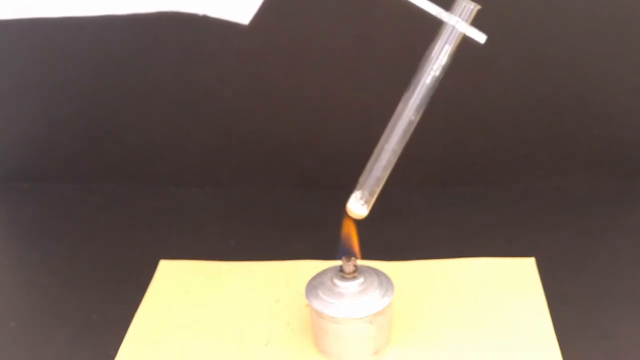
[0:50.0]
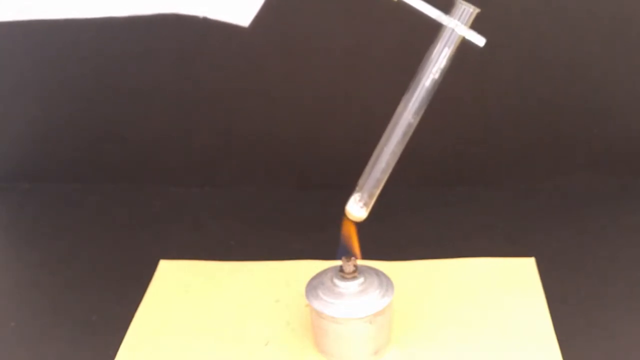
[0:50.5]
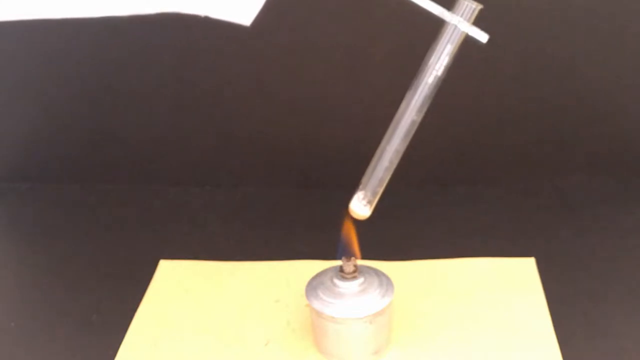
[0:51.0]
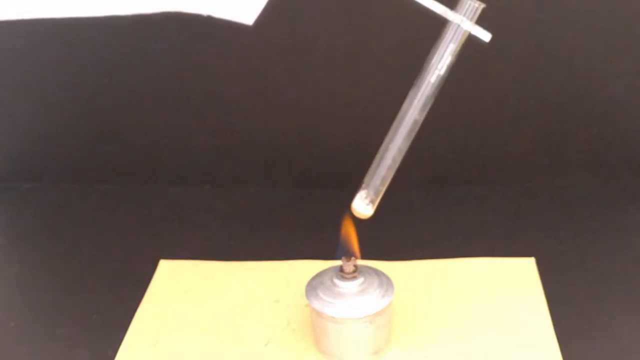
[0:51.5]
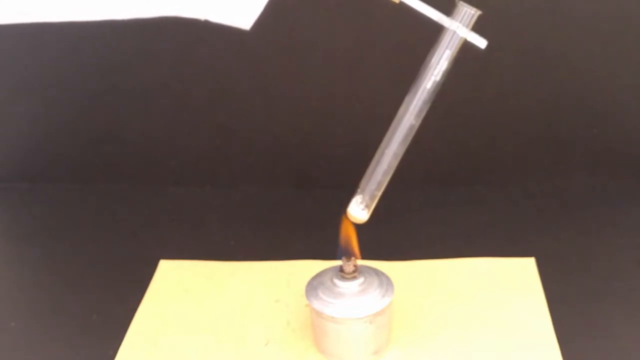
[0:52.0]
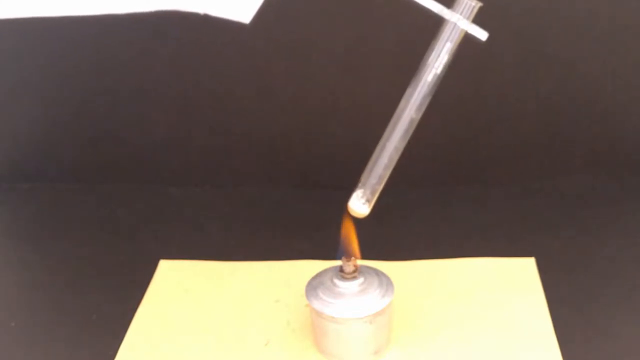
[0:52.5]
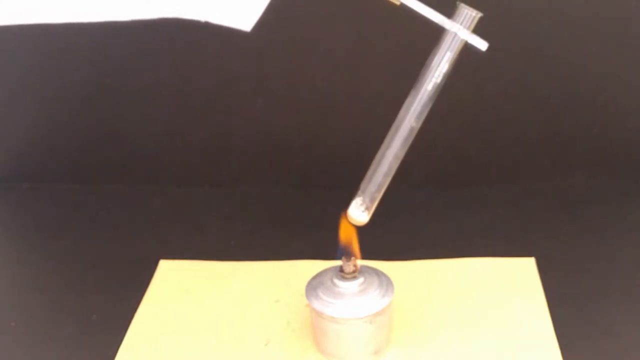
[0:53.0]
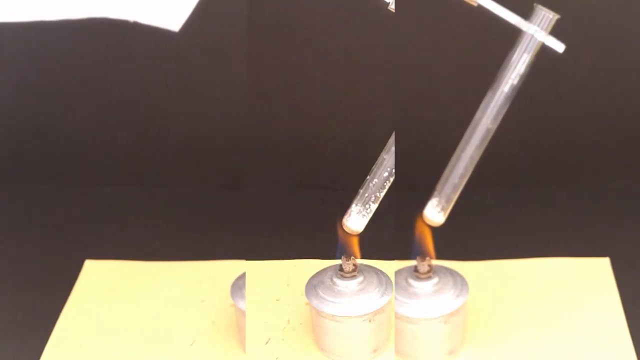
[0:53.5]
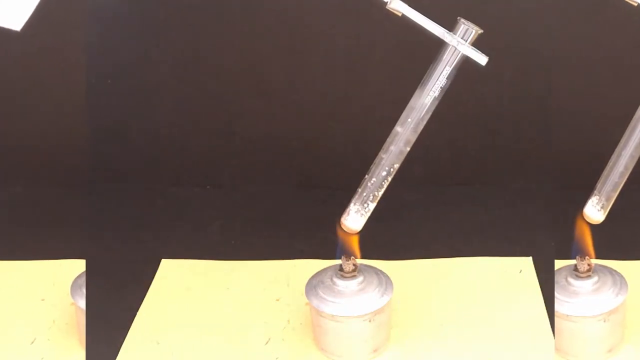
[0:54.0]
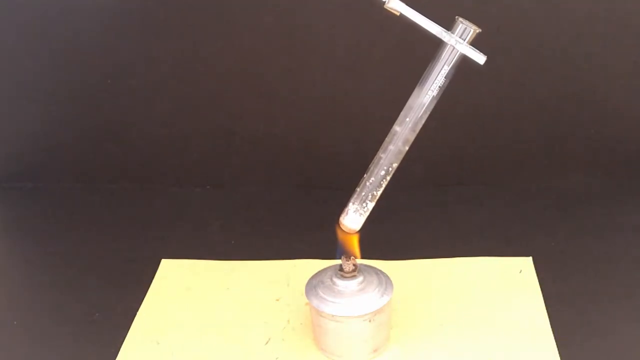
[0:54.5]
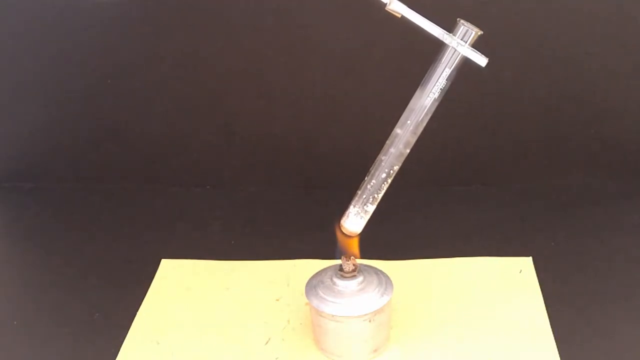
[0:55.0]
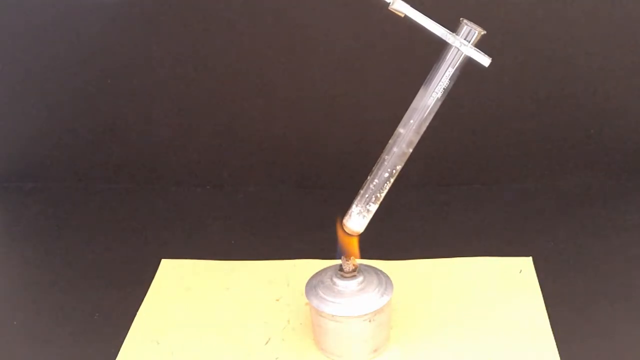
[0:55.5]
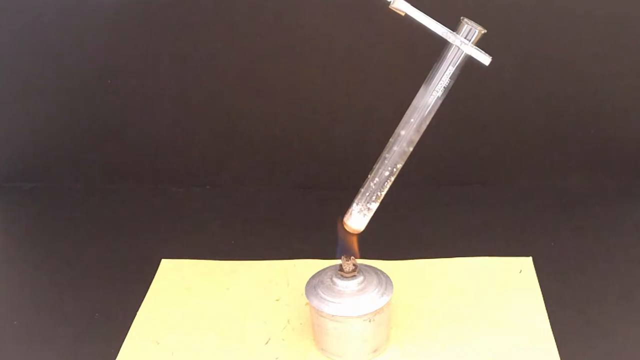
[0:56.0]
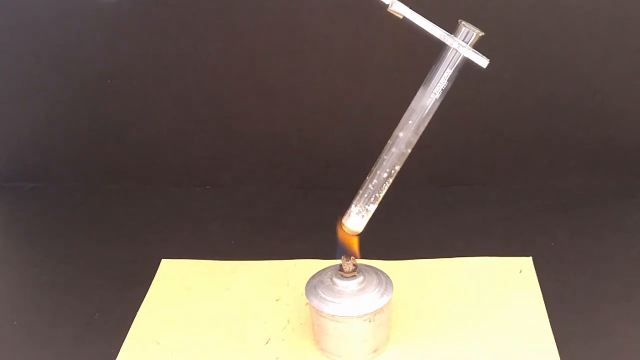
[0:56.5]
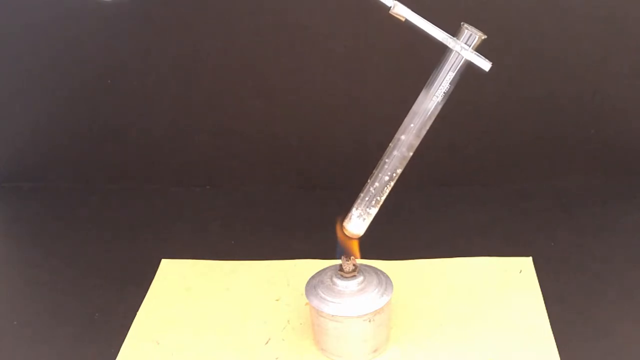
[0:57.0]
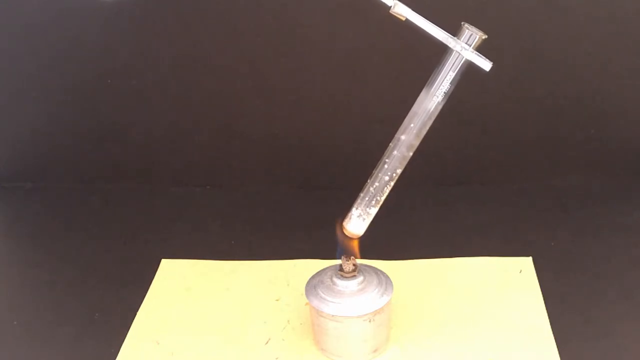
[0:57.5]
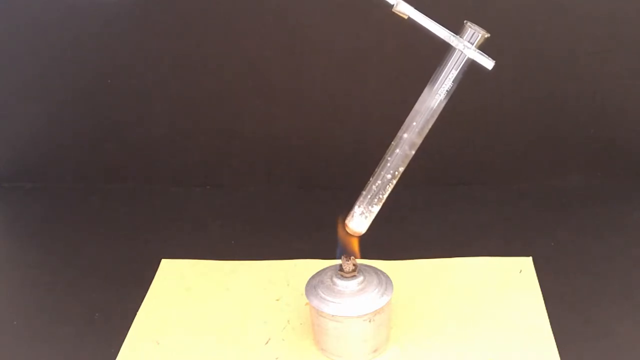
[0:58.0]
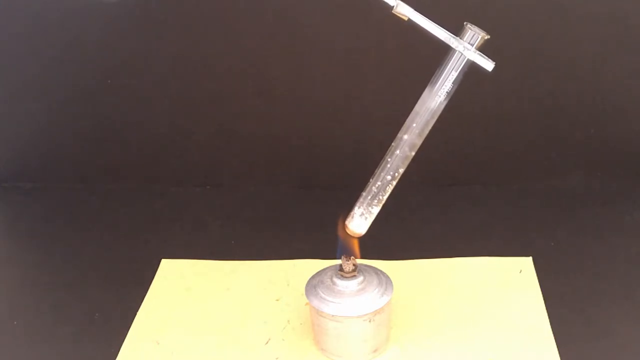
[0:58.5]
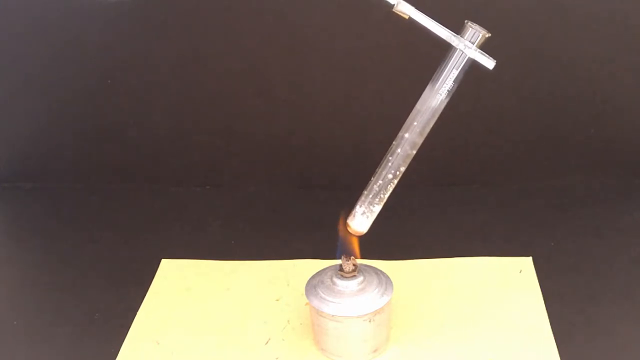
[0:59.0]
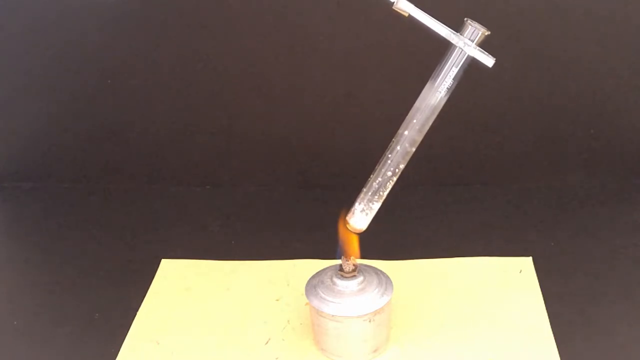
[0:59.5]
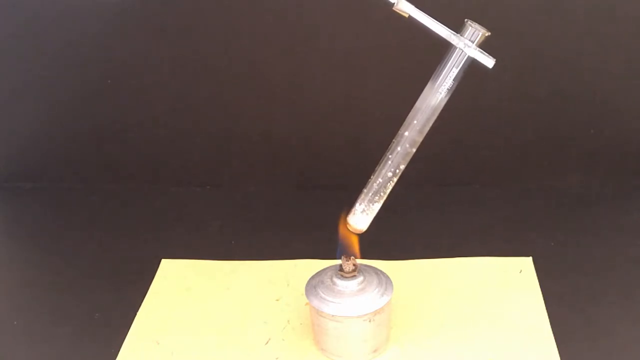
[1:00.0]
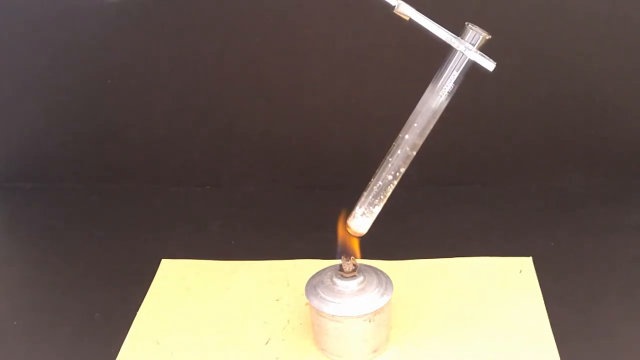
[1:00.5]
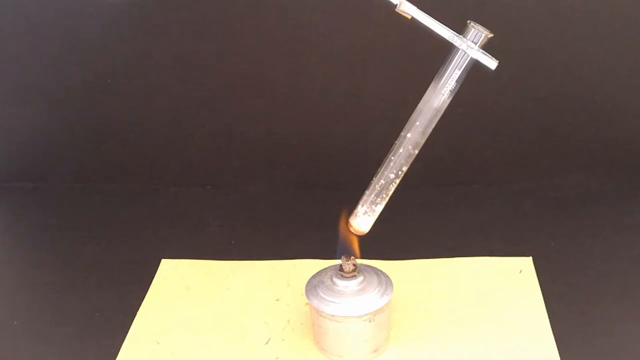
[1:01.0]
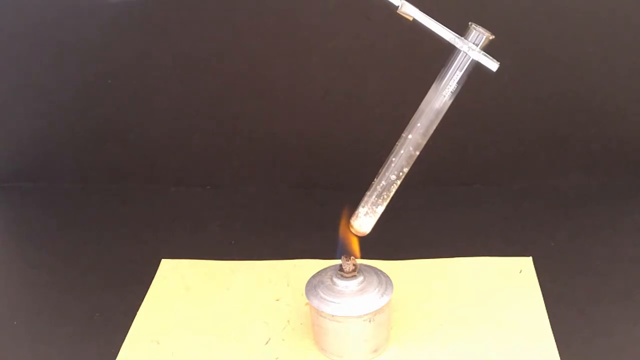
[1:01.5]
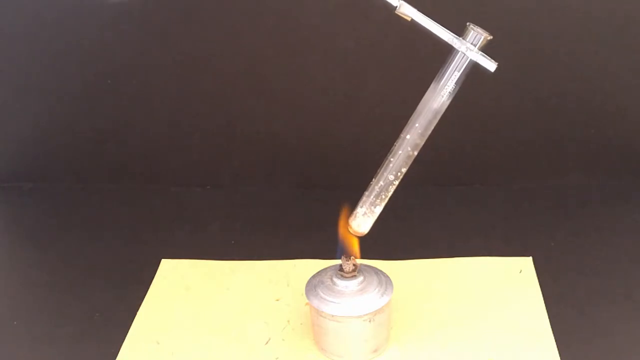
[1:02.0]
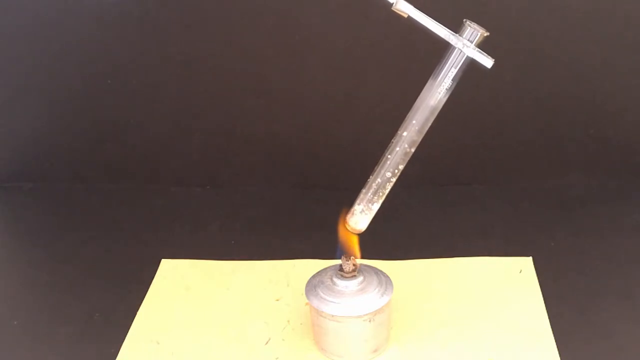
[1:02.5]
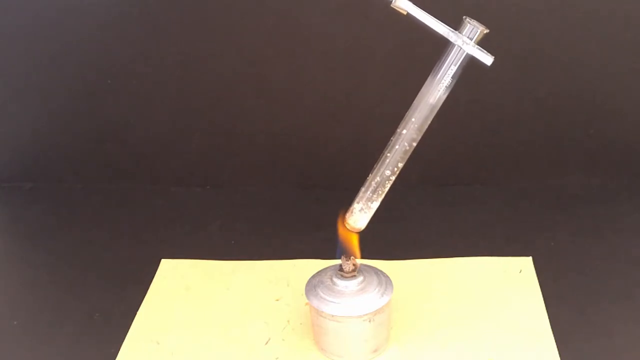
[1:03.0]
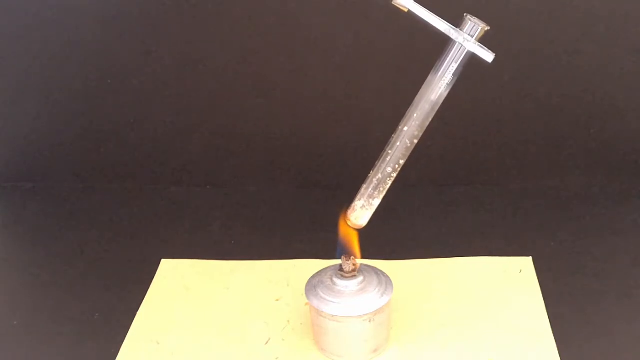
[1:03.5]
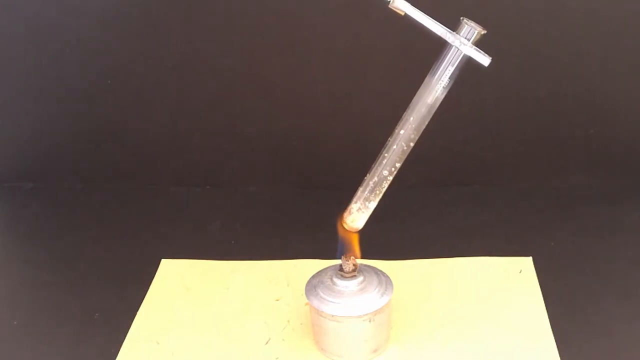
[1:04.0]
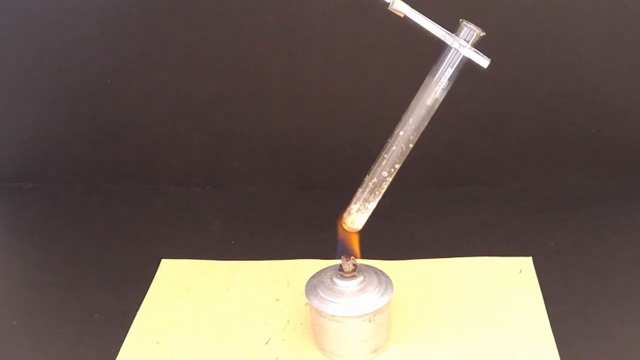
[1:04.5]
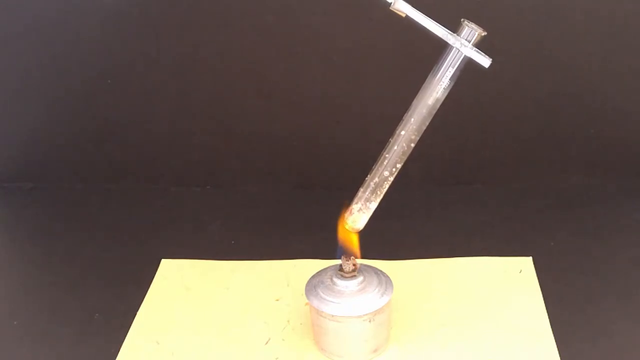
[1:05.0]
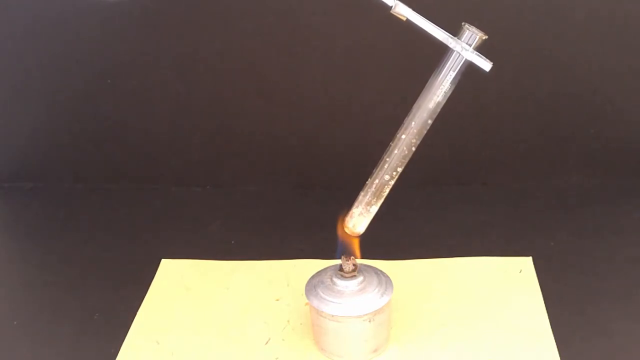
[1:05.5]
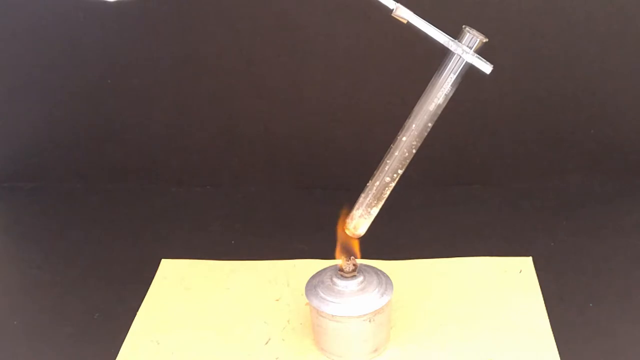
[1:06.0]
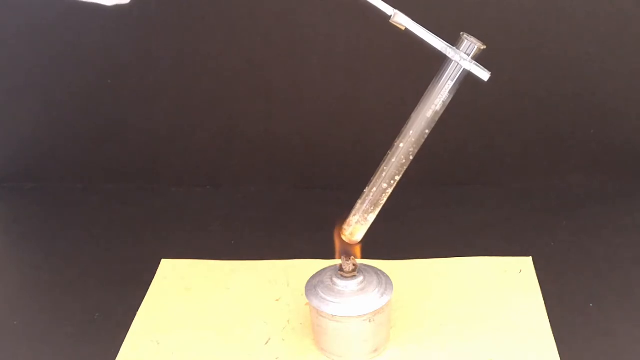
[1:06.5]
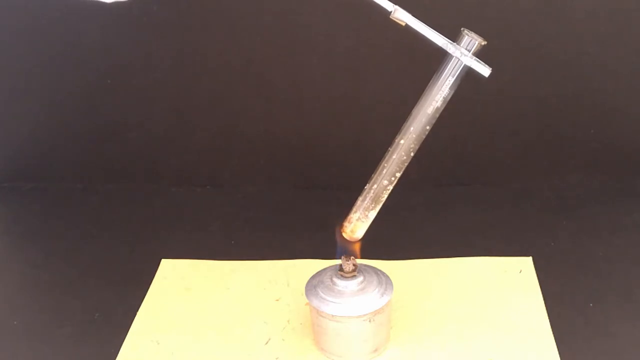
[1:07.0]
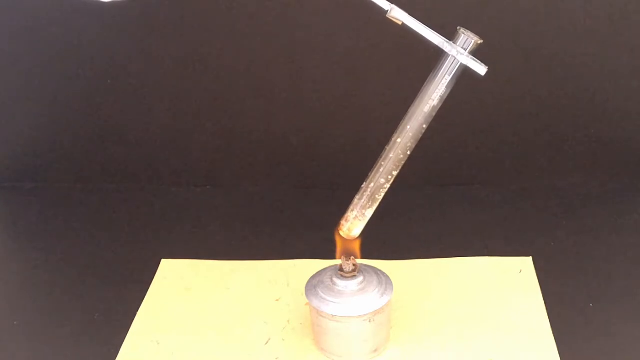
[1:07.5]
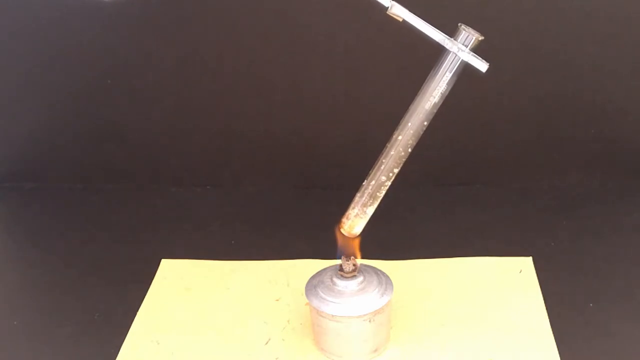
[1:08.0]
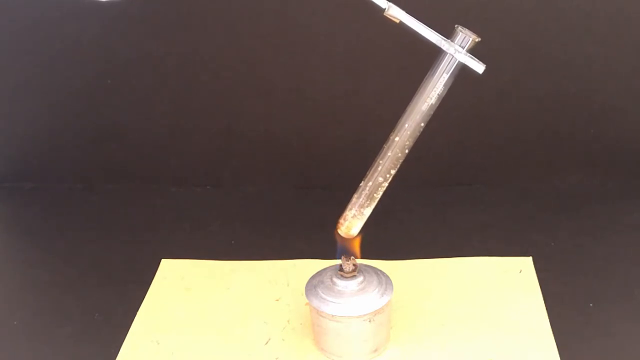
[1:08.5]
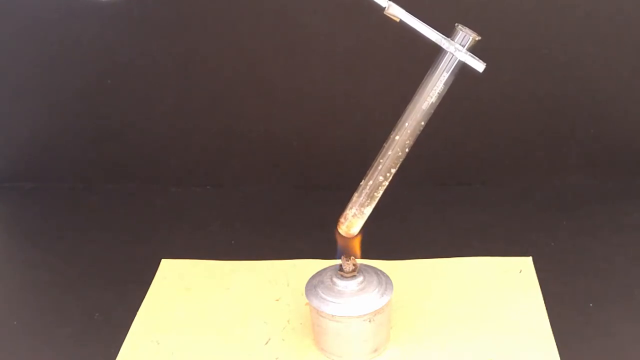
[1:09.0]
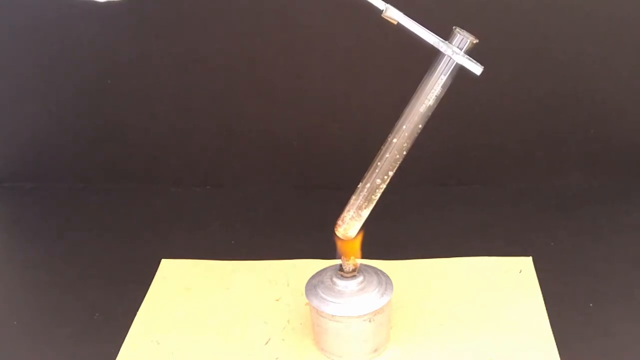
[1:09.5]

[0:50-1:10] Some kind of torch, lantern or lamp is on a table, sitting on a yellow-looking rectangular object, maybe paper or some kind of mat. The lamp looks like the type that runs on oil or alcohol, and an orange flame comes out of the wick at its top. The table looks very dark in color, black or dark gray. Somebody holds a test tube or vial with a white substance inside over the flame, using some kind of white tongs or similar device. The bottom of their white sleeve is visible in the top left corner of the screen. They hold the tube to the flame for several seconds, and the substance inside appears to turn more yellowish than white.